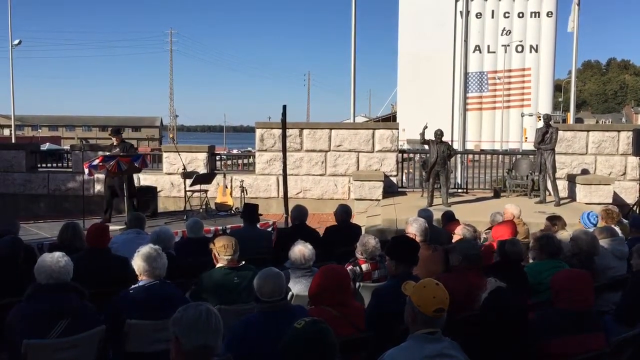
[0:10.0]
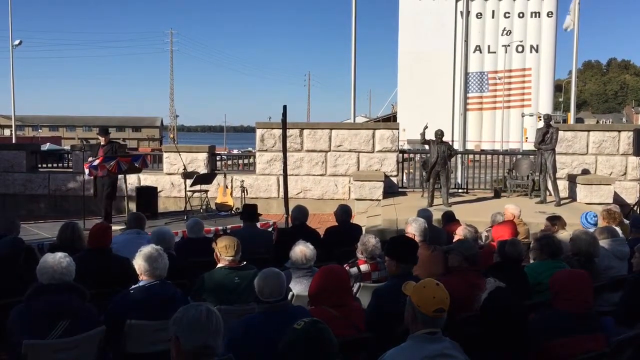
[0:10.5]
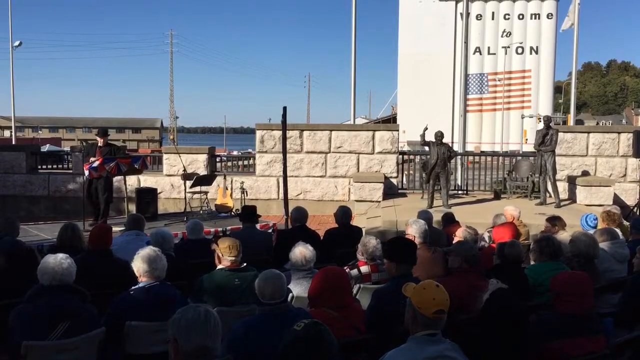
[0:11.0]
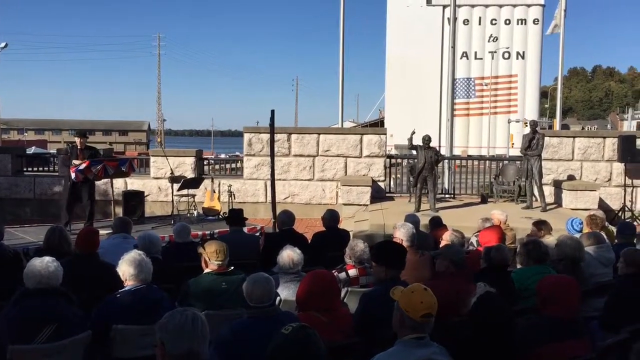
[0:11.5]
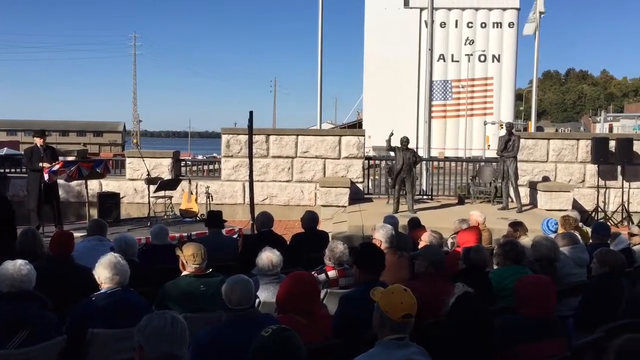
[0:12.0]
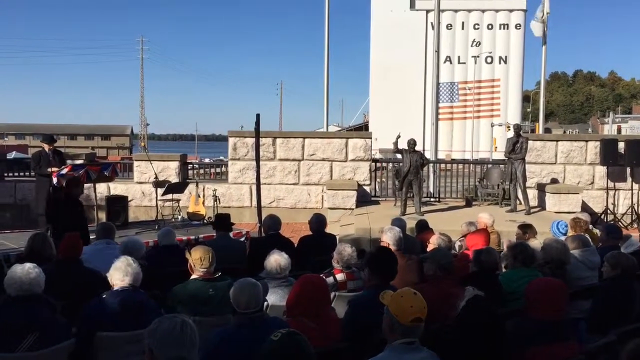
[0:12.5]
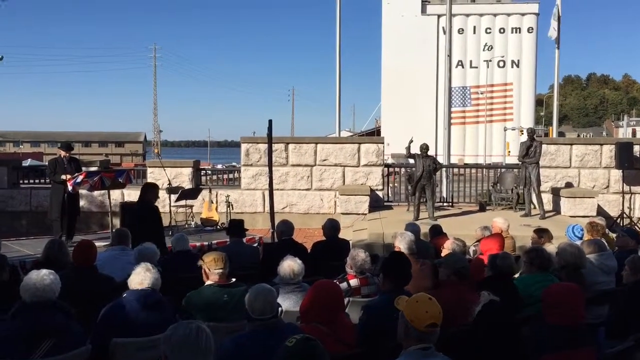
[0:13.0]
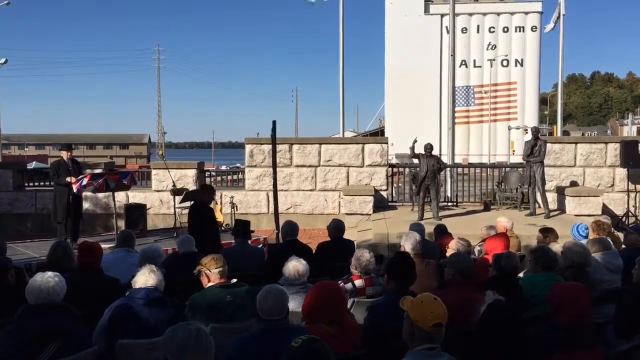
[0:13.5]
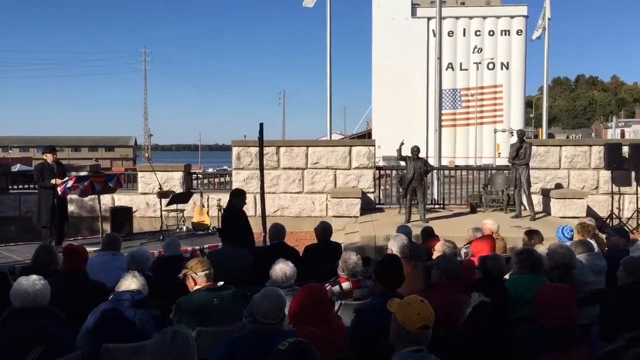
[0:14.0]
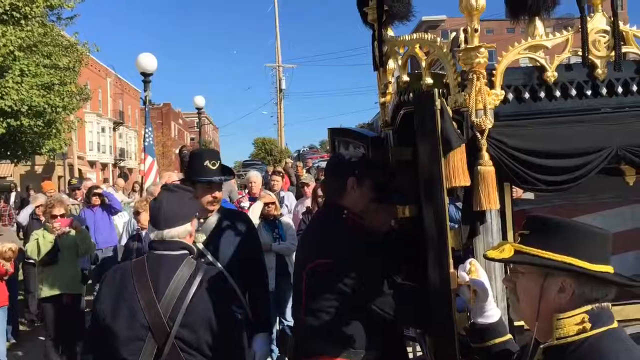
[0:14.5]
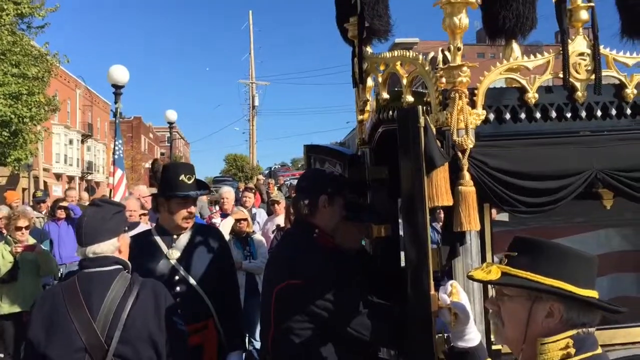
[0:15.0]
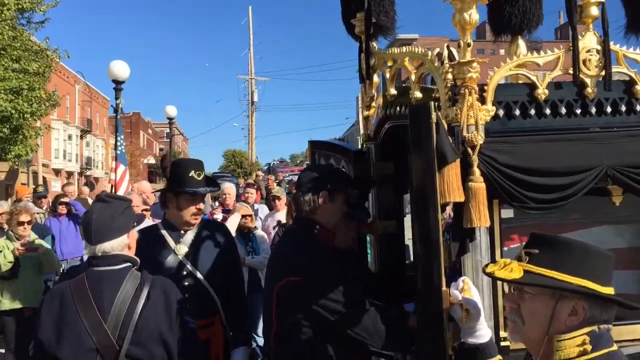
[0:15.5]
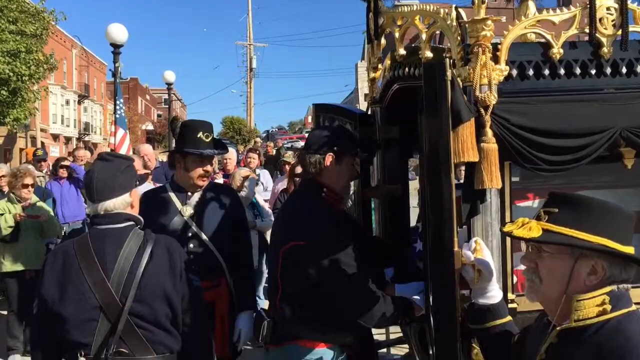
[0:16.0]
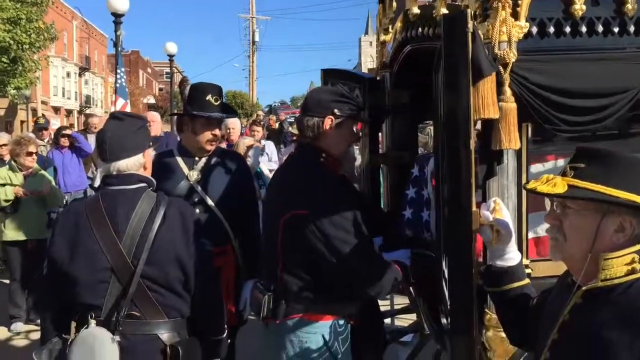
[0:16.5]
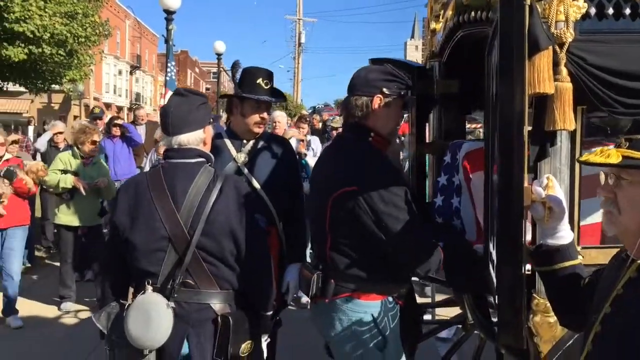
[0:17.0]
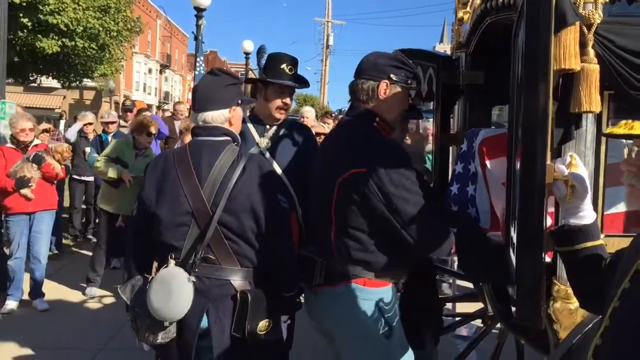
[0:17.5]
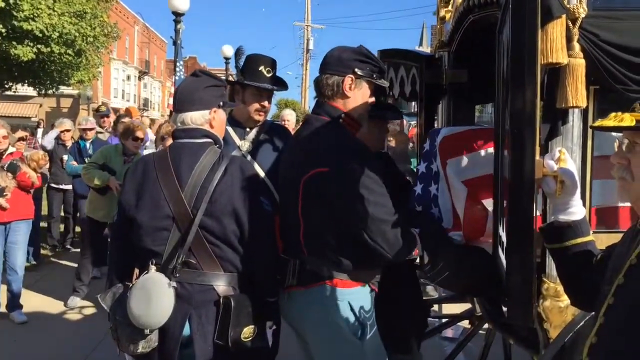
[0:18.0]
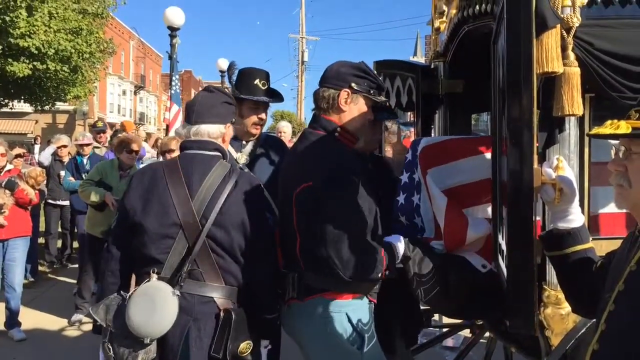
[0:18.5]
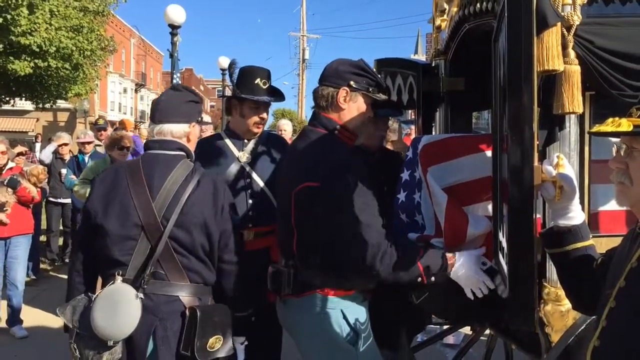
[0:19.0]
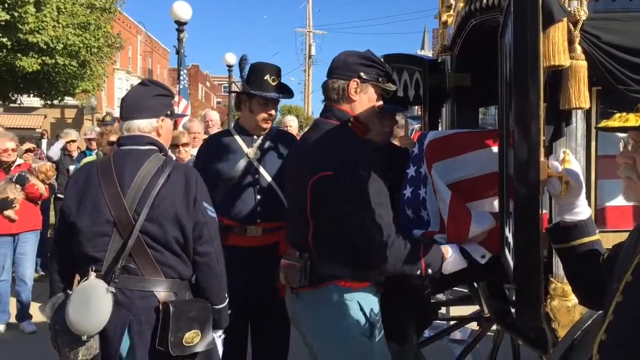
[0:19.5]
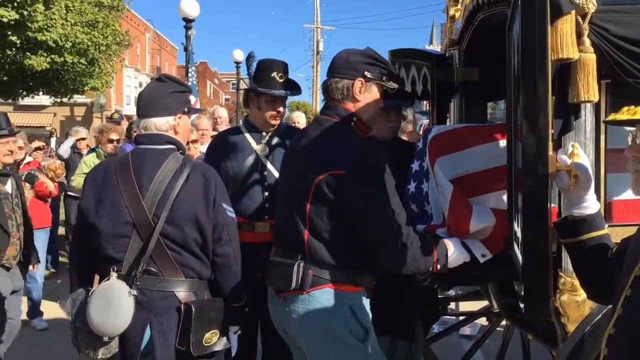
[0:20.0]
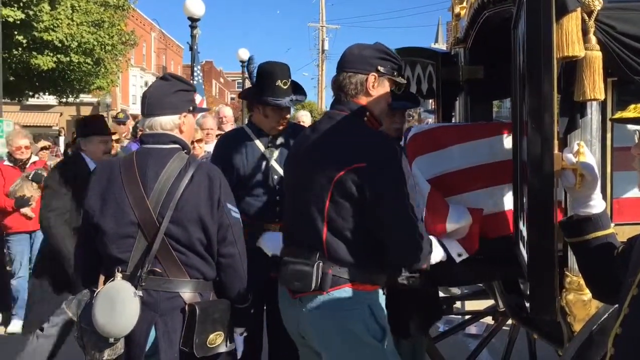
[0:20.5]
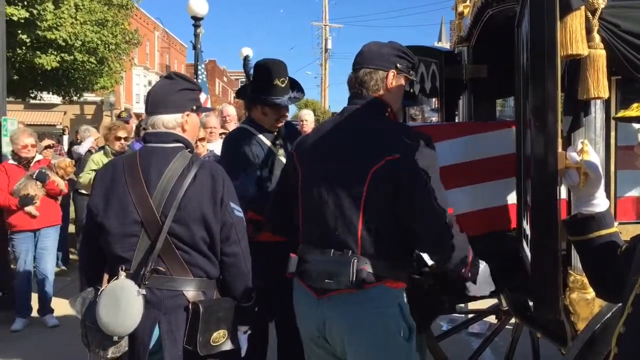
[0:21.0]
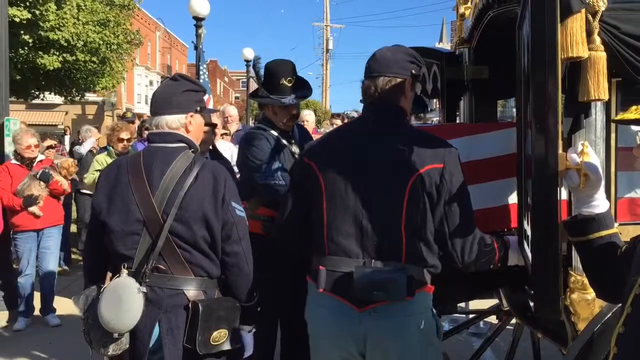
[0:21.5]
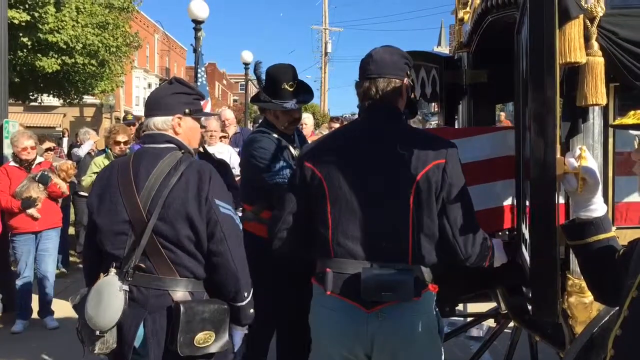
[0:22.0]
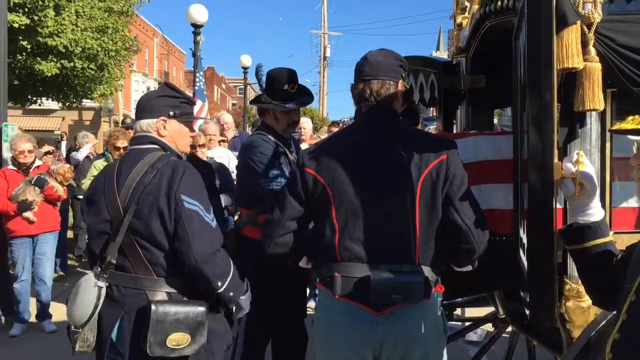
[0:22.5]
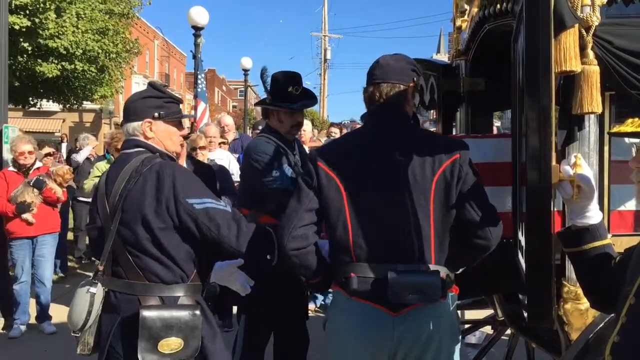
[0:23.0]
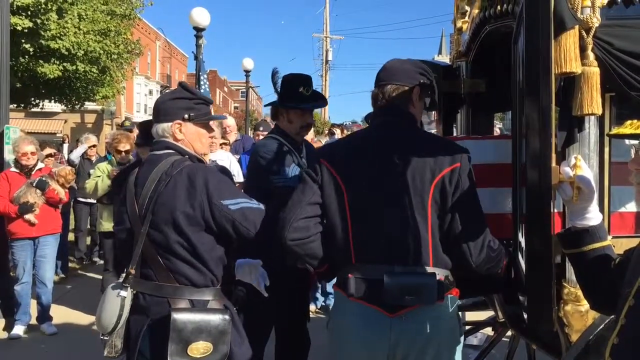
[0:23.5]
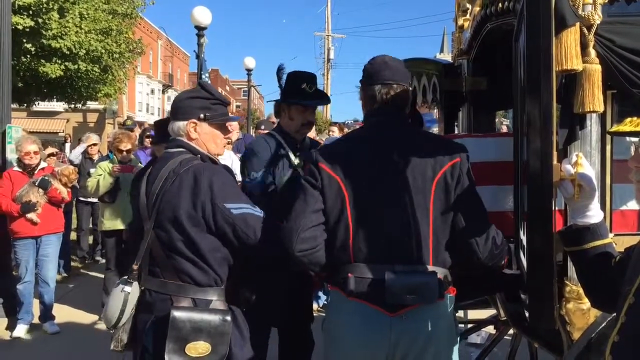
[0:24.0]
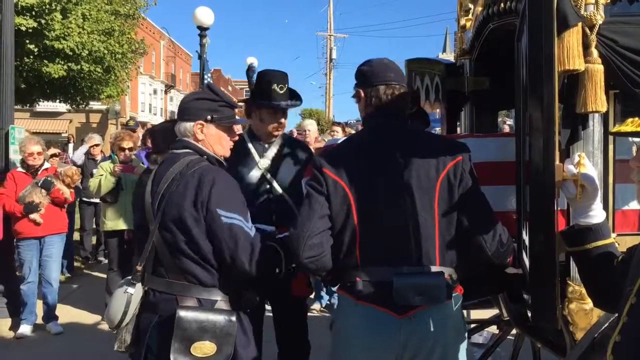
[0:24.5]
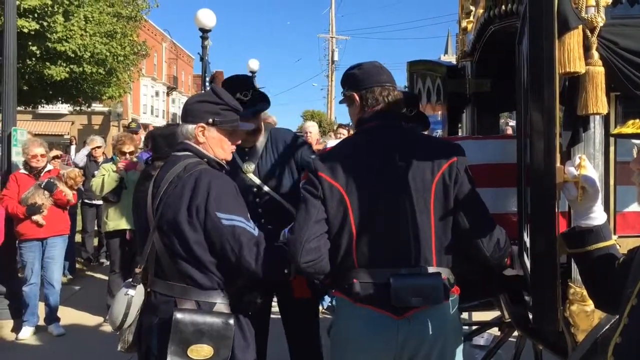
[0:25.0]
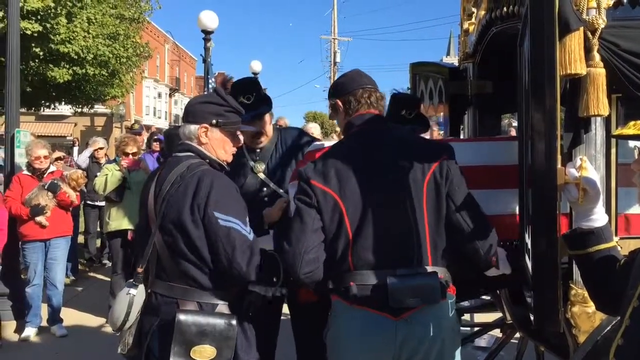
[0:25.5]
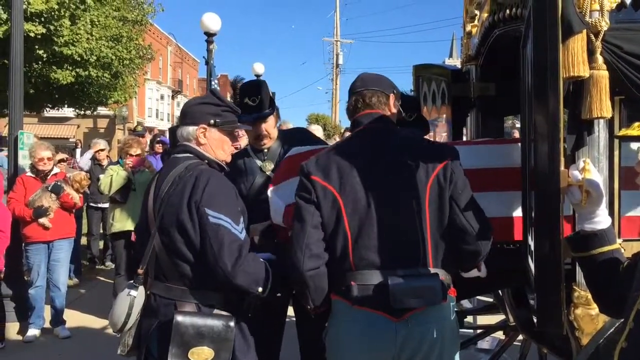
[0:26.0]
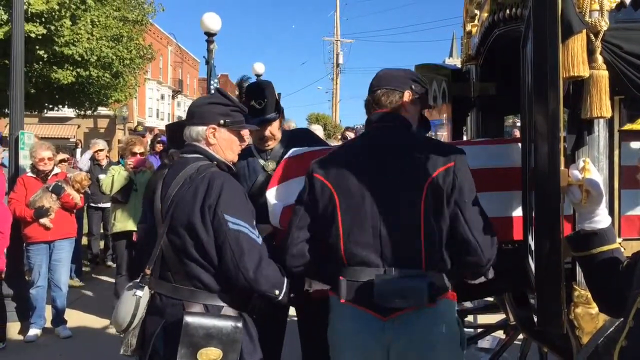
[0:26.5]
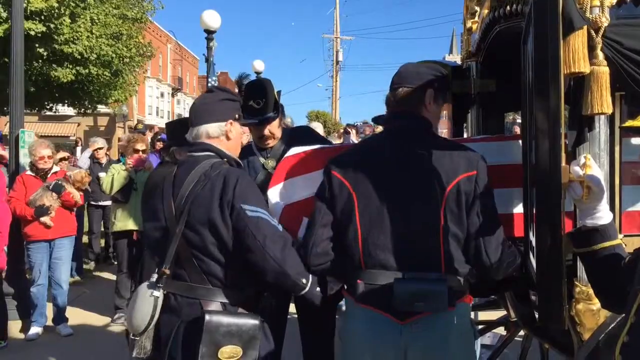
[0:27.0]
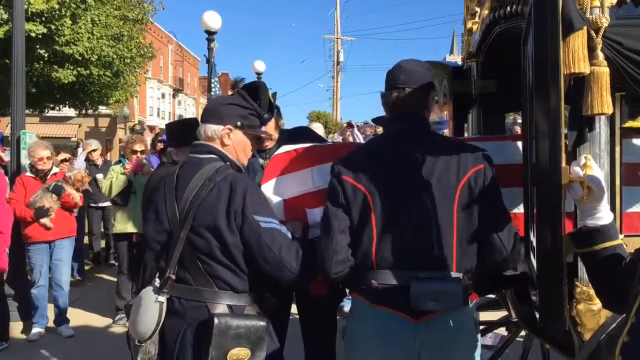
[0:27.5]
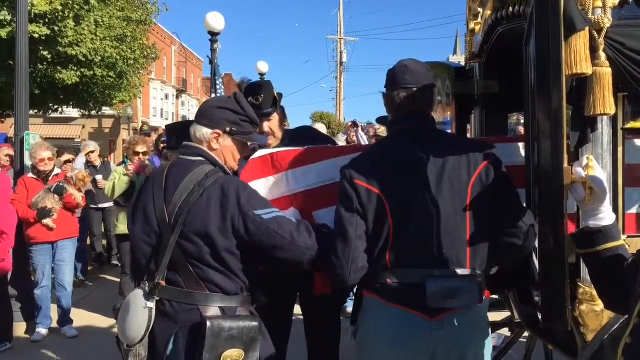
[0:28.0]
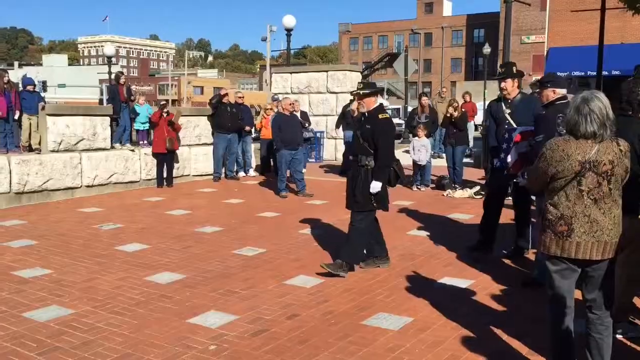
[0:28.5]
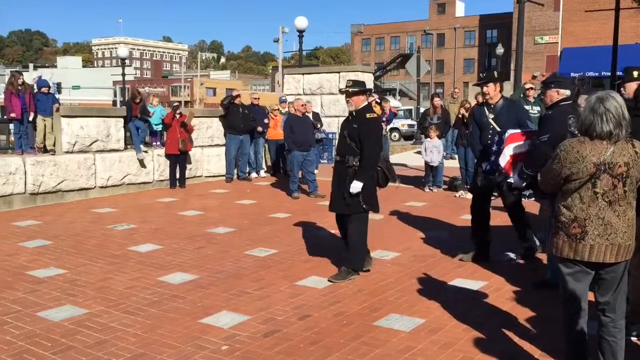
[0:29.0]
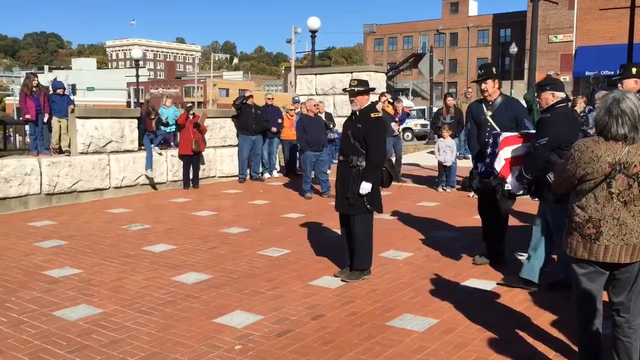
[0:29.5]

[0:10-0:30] A small crowd is gathered outdoors, seated and looking at a man speaking at a podium whose edges are decorated with red, white, and blue bunting. The man at the podium wears a long black coat and a black derby hat. To the right of the scene are two statues of men: one depicts a man standing and speaking to a crowd with his right hand raised, and the other shows a man standing to the side as though looking at the man speaking. There also appears to be a sculpture of a chair next to one of them. Behind them is a white wall or white structure of some kind with an American flag on the side, and above that it reads "Welcome to Alton." Next to that is a flagpole with a white-background flag at the top. A stone wall in front of this surrounds the area with the statues. In the background, behind the area where the speech is happening, is a body of water, a river or a lake. It is a clear day.